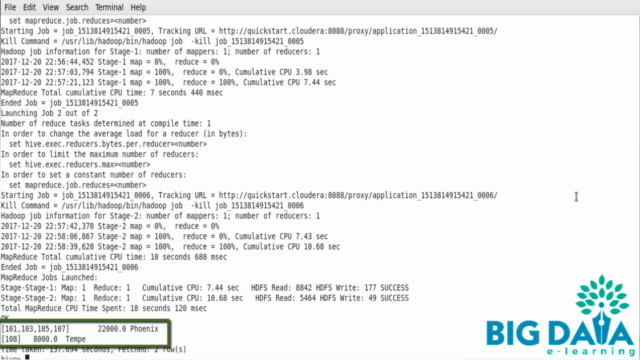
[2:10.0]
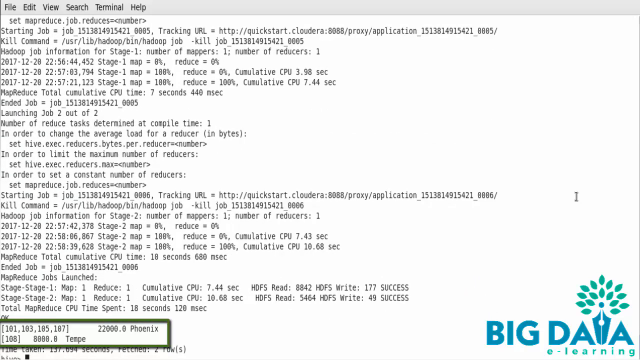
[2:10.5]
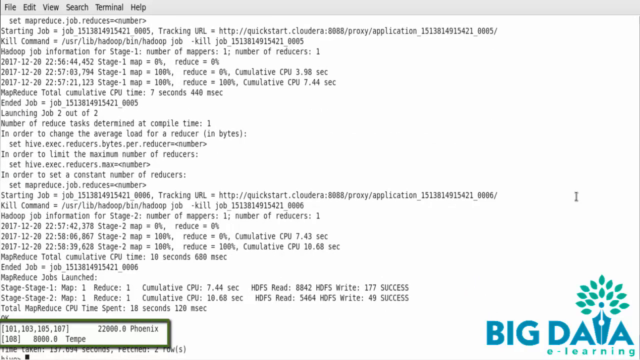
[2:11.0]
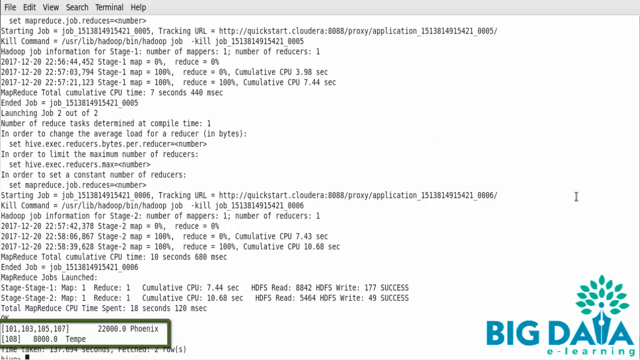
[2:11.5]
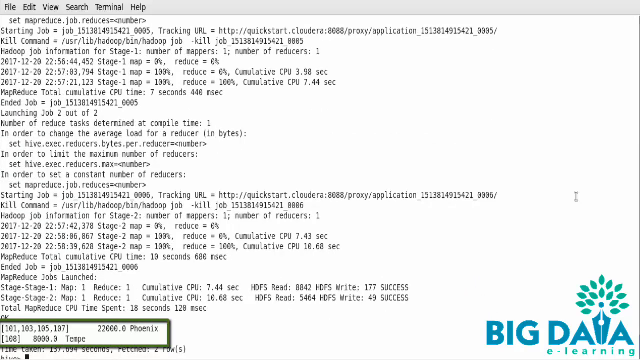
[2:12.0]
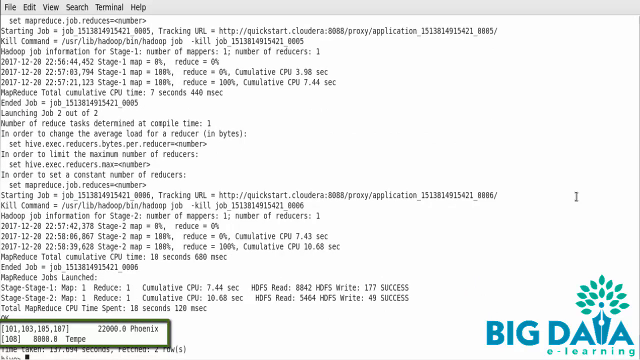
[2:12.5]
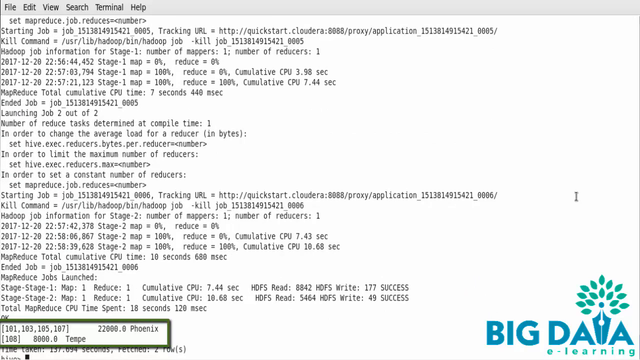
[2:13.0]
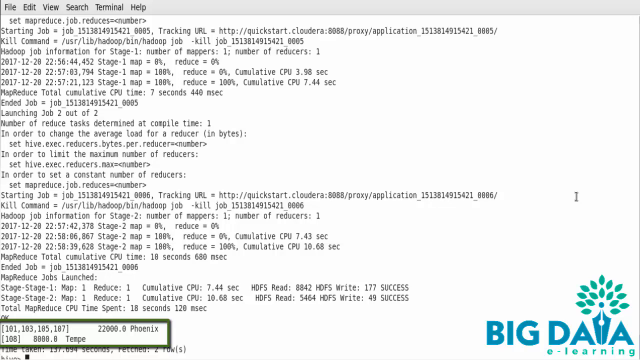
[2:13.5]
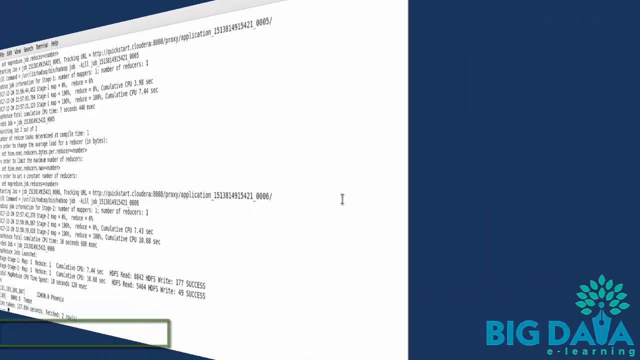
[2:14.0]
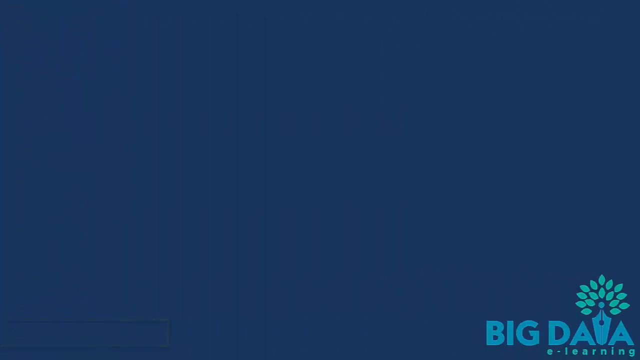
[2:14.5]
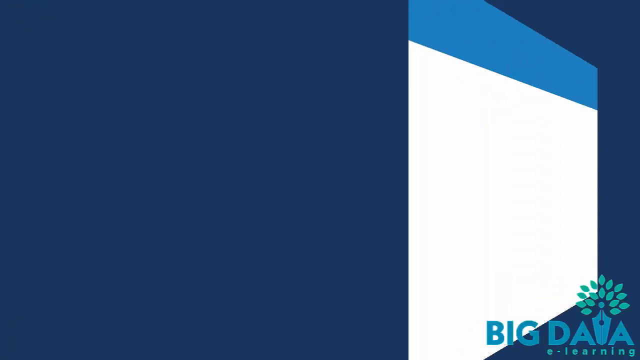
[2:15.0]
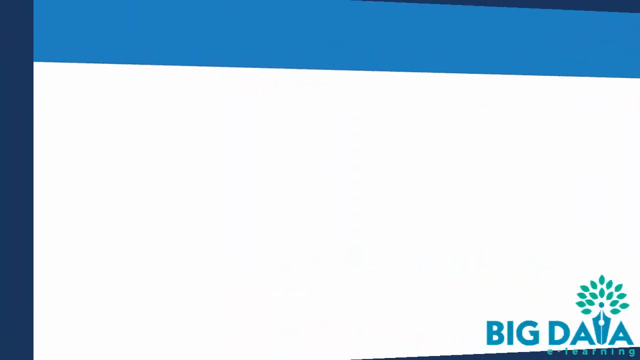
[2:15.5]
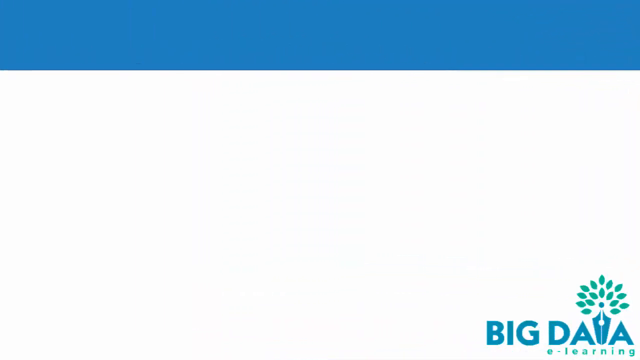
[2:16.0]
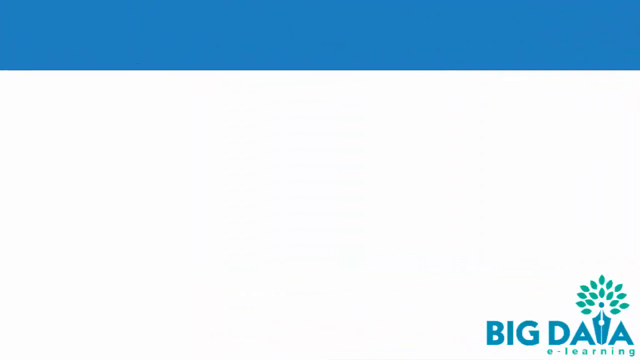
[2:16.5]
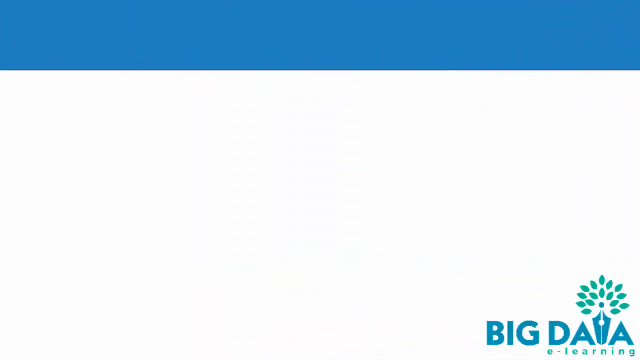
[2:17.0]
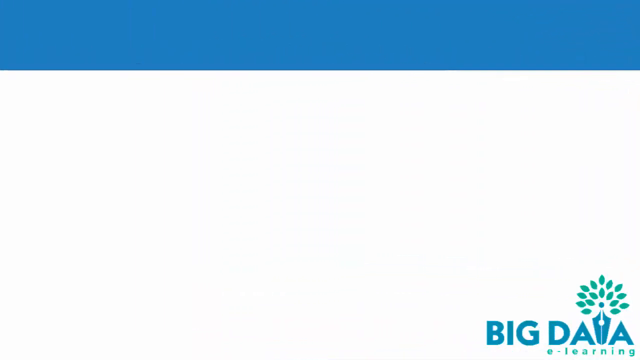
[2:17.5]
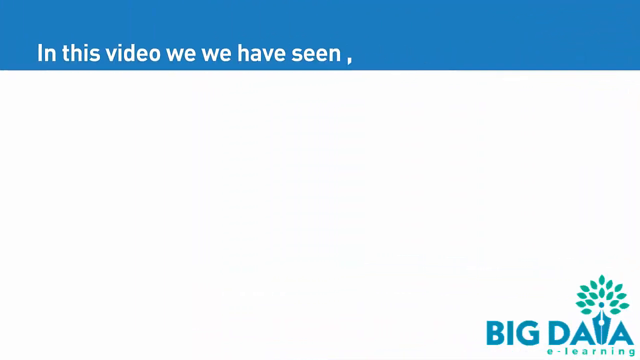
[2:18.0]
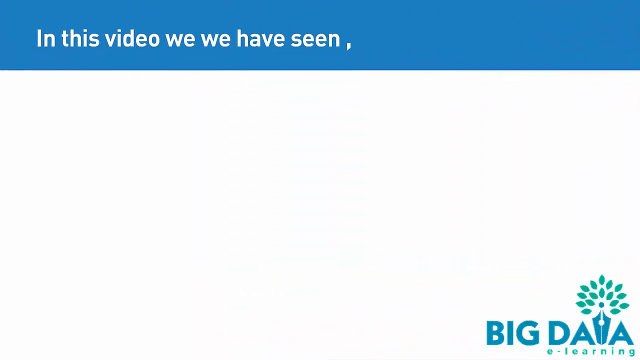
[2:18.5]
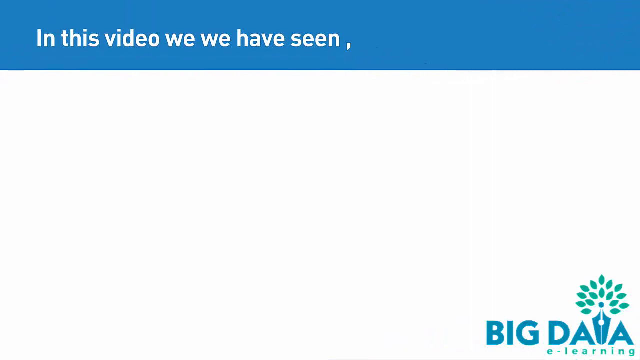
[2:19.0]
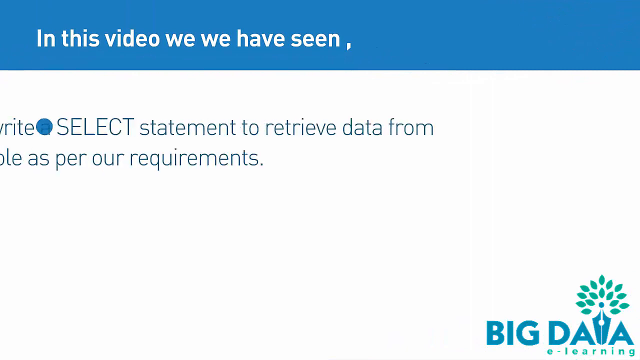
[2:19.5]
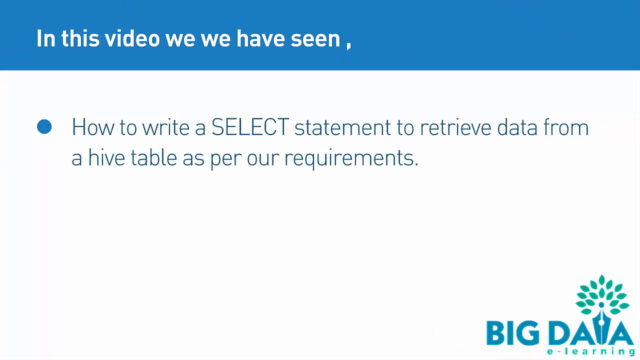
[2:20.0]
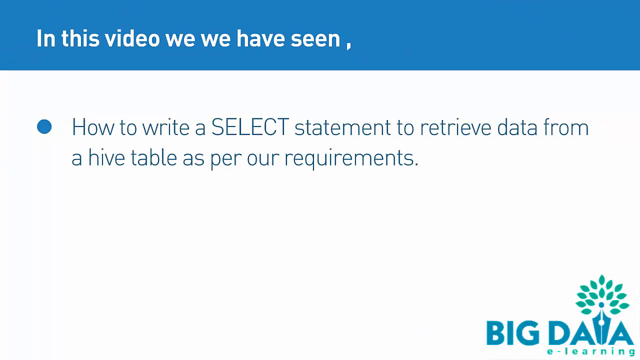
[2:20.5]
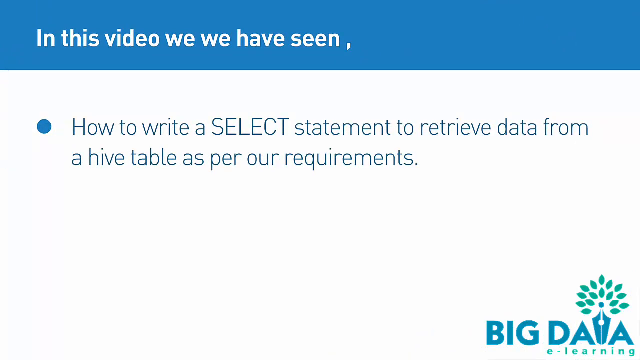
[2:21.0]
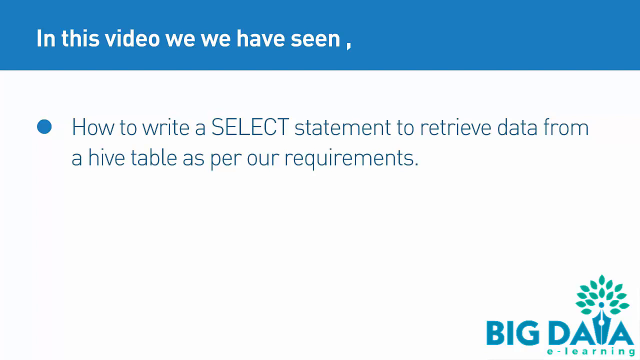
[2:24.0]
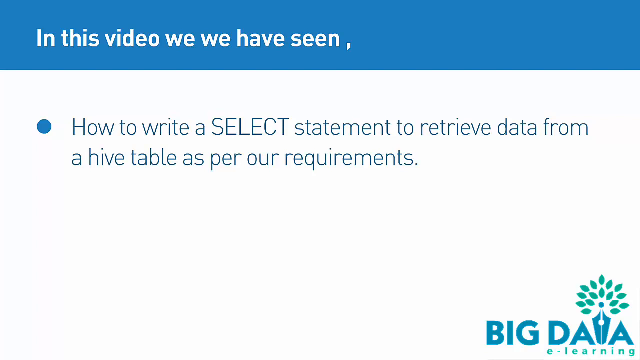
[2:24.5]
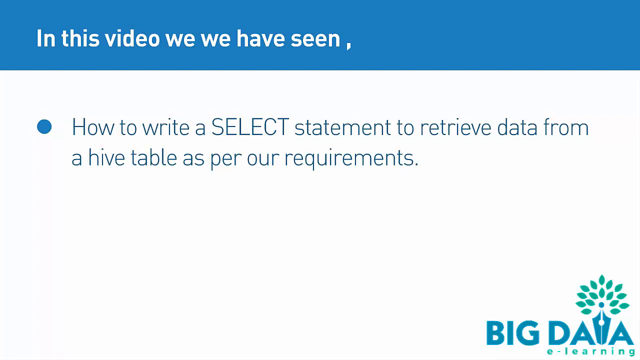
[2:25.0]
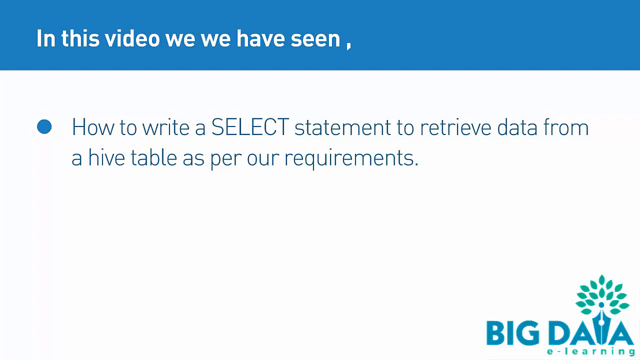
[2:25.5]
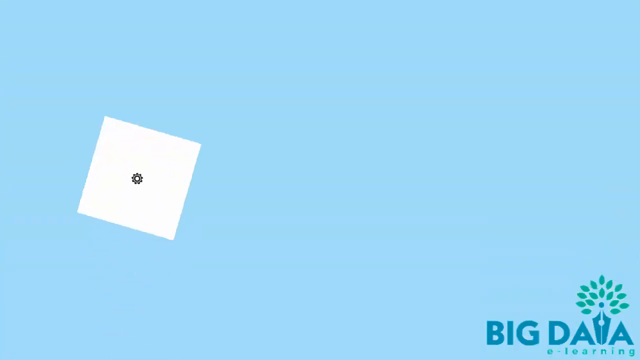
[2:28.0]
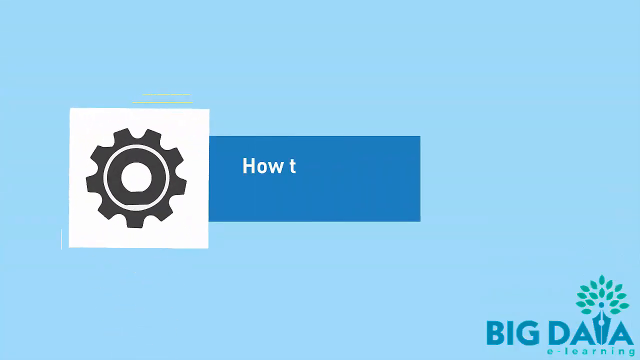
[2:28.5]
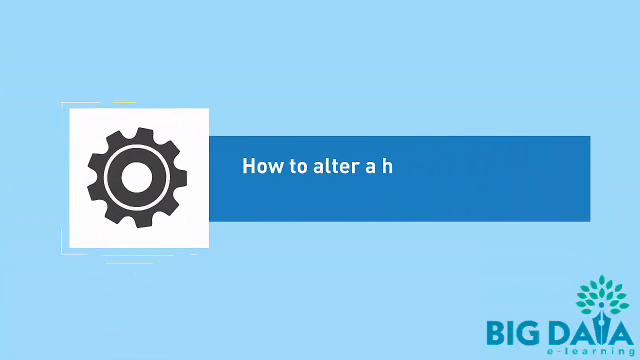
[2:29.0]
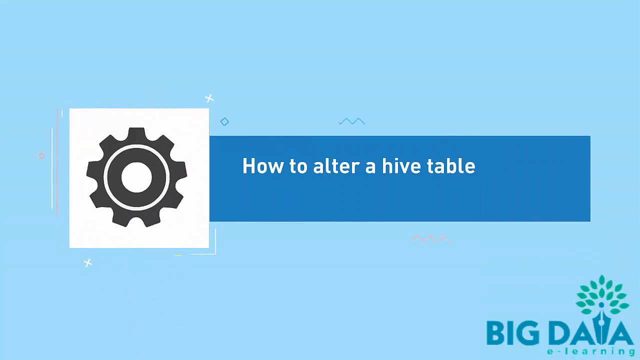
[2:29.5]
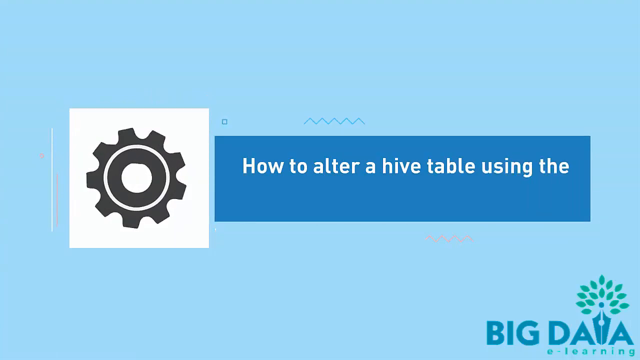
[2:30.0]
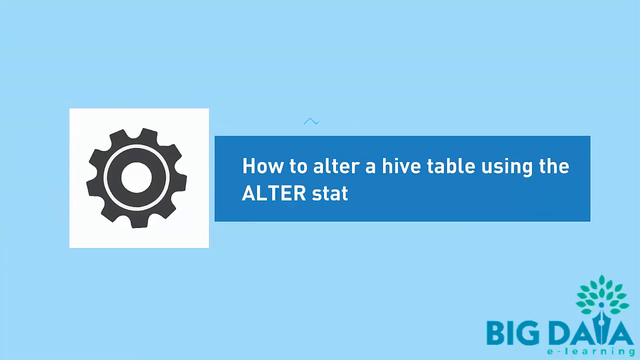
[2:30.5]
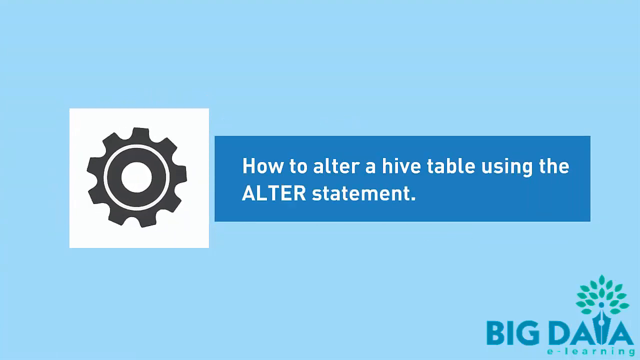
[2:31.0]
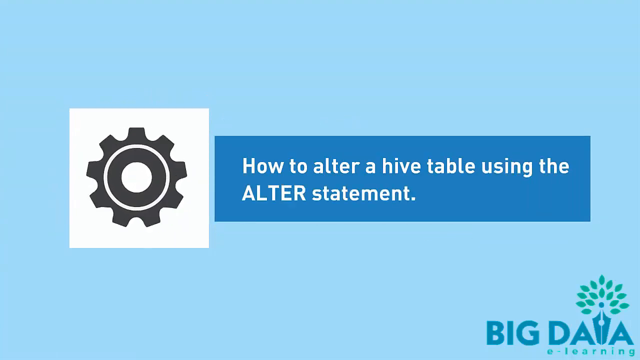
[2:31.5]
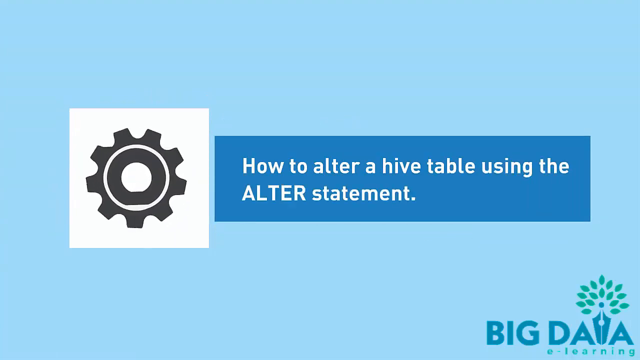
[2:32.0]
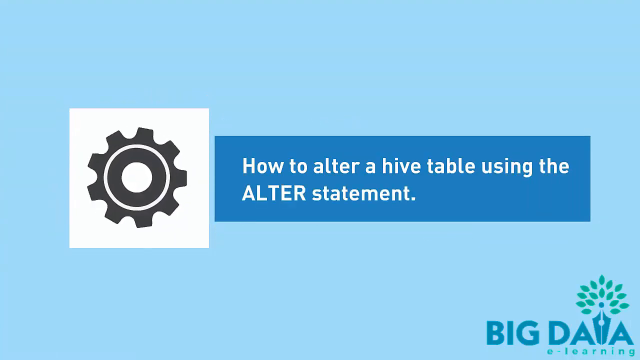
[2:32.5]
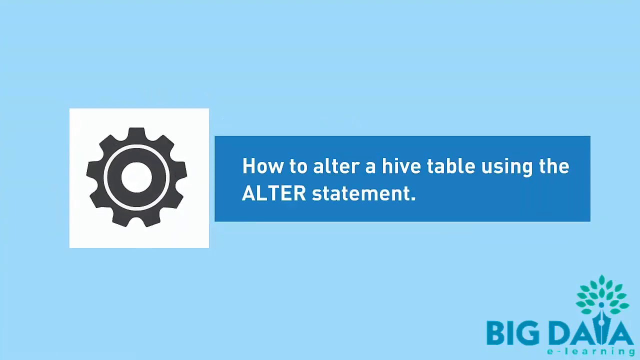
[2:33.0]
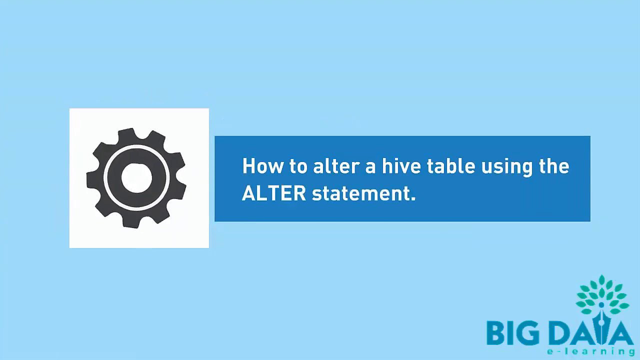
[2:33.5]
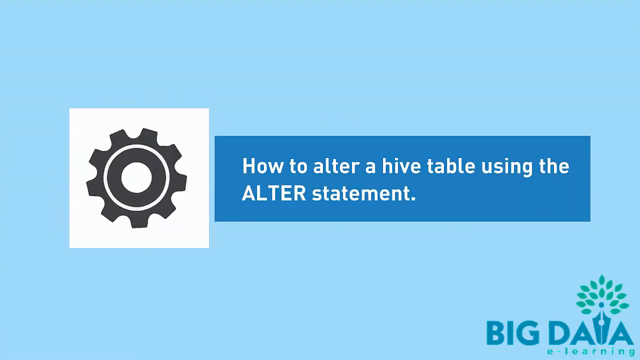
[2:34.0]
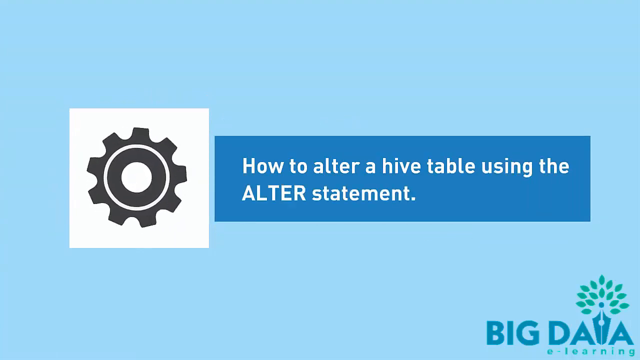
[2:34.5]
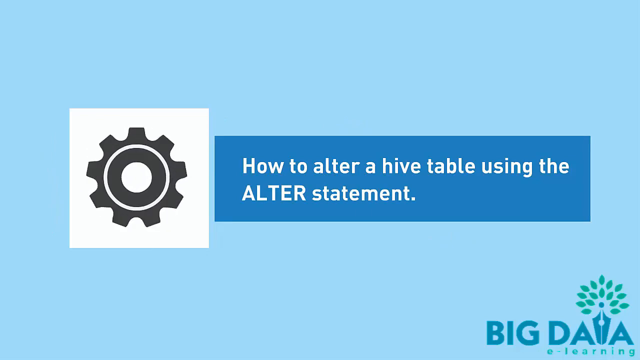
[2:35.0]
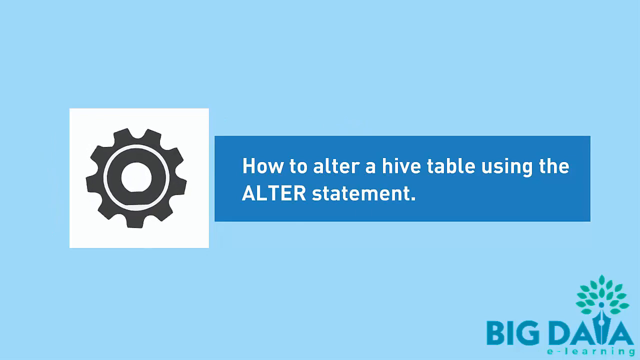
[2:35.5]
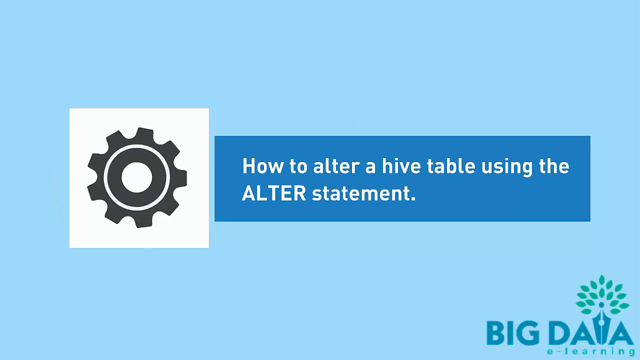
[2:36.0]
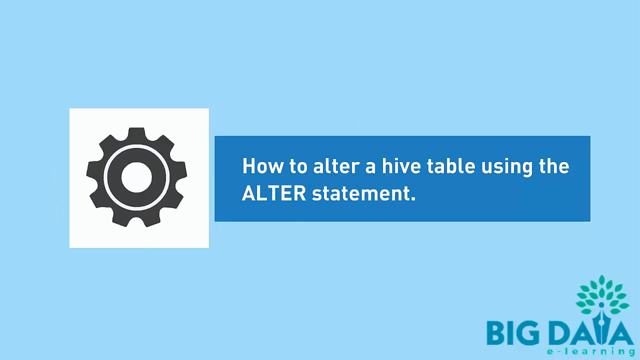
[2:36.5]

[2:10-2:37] What looks like a computer screen shows many lines of script that fill the page. The screen appears to turn, and a new screen appears with a blue bar at the top and a white text box at the bottom. In the blue bar, text appears reading "In this video we have seen," and below it a bulleted point appears in the white text box reading "How to write a SELECT statement to retrieve data from a HIVE table as per our requirements." The screen then changes to a new page with a light blue background, showing a graphic of a revolving gray cog in a white box, and next to it a blue text box appears with the text "How to alter a HIVE table using the ALTER statement".